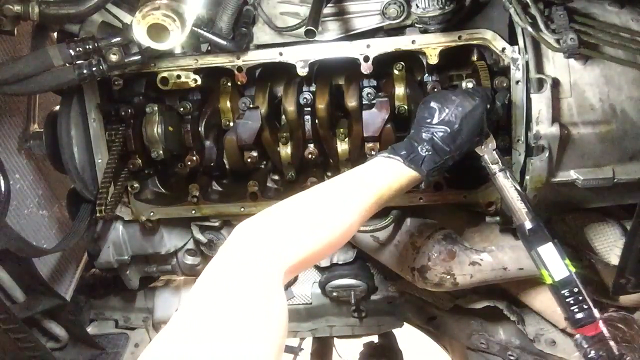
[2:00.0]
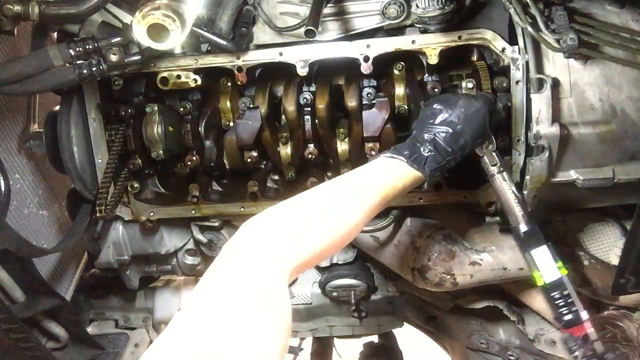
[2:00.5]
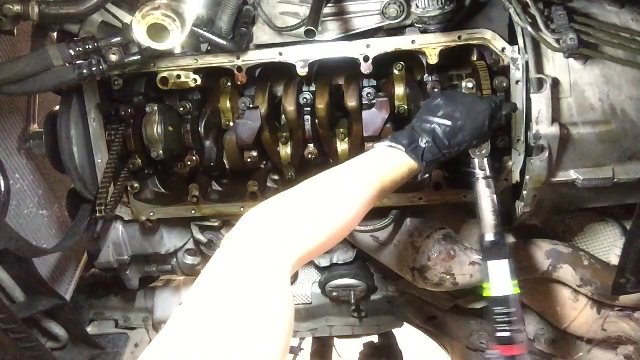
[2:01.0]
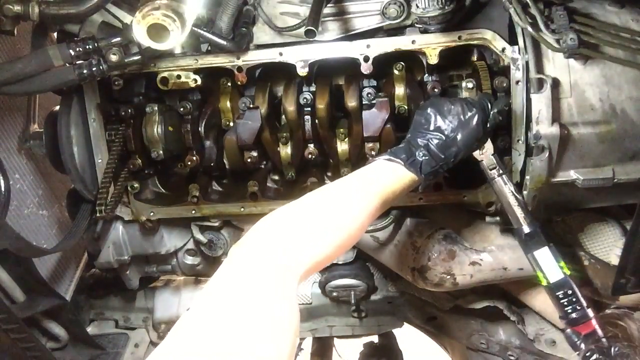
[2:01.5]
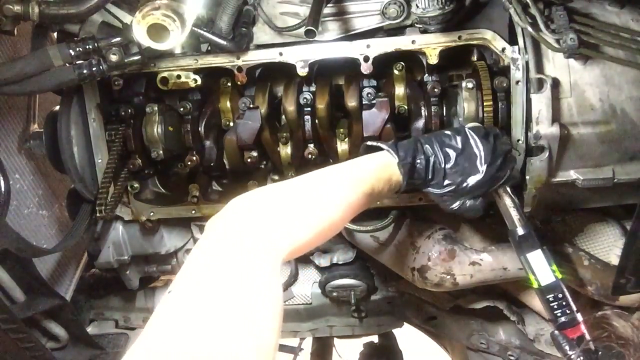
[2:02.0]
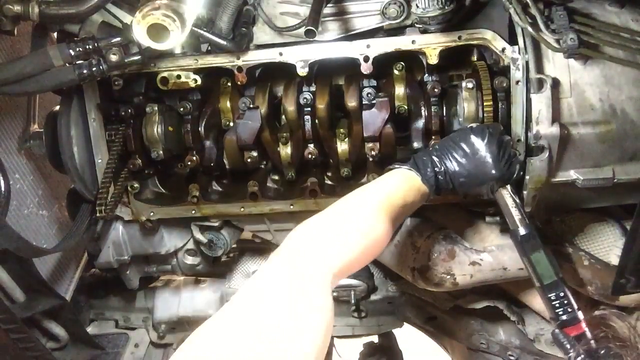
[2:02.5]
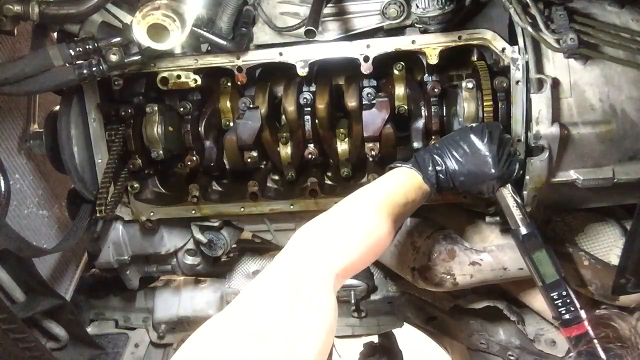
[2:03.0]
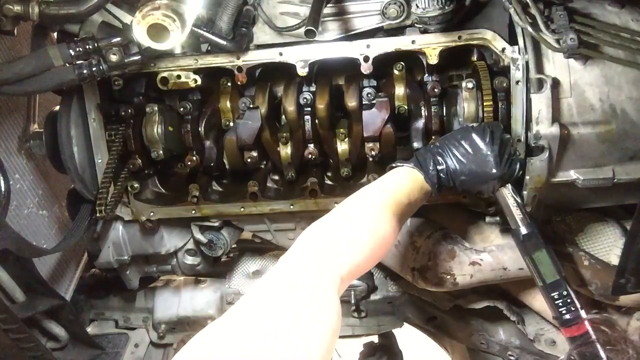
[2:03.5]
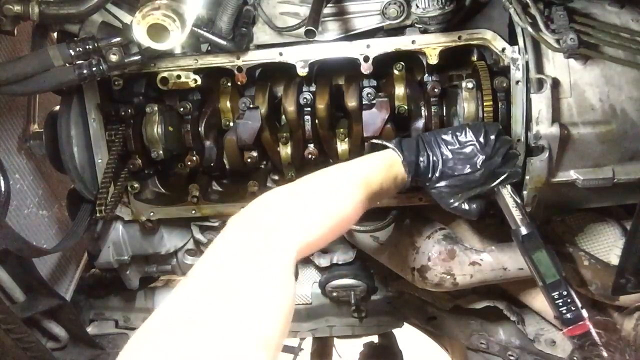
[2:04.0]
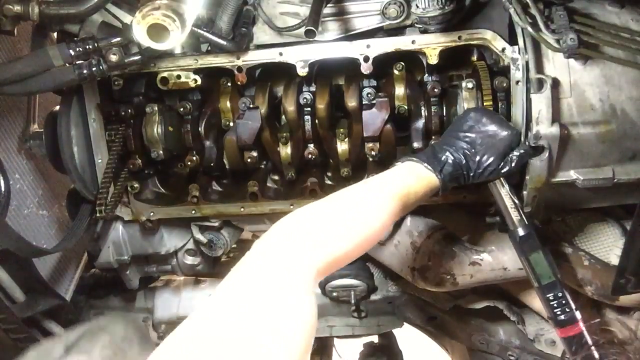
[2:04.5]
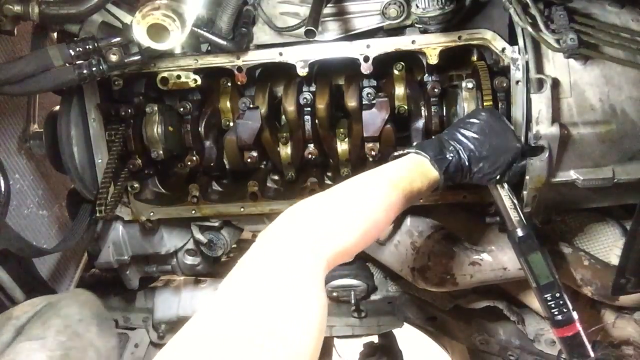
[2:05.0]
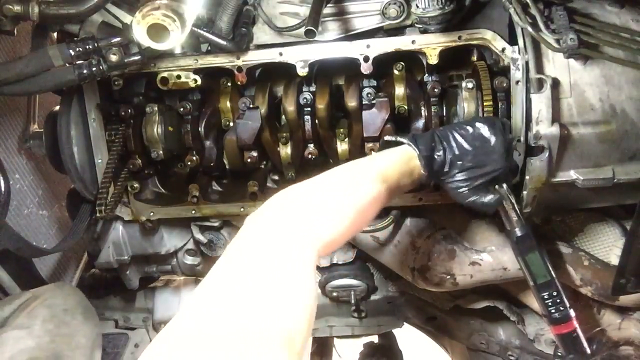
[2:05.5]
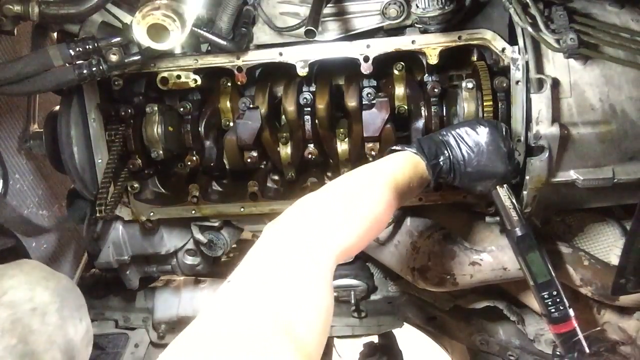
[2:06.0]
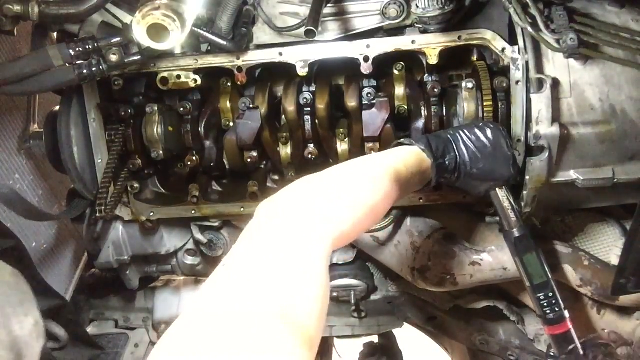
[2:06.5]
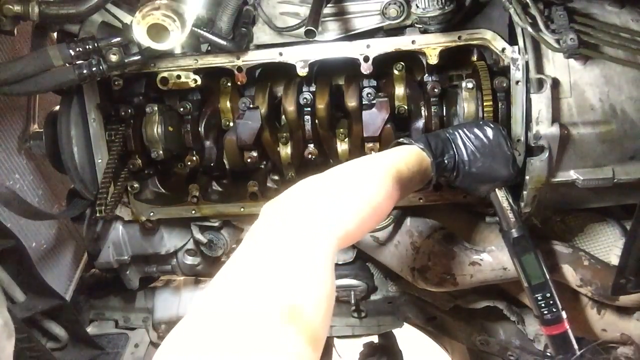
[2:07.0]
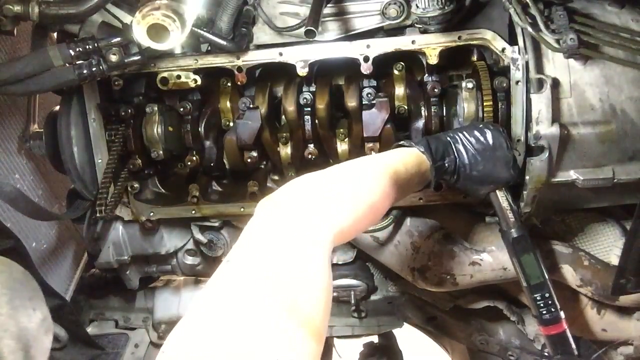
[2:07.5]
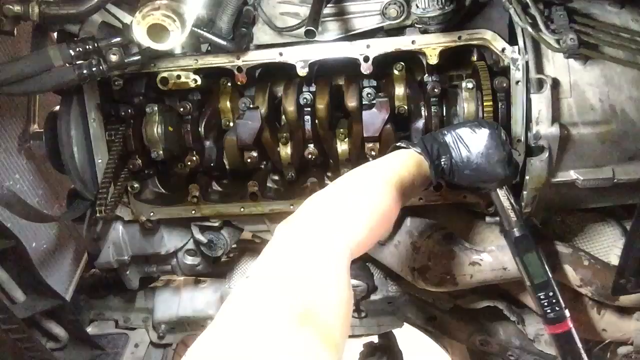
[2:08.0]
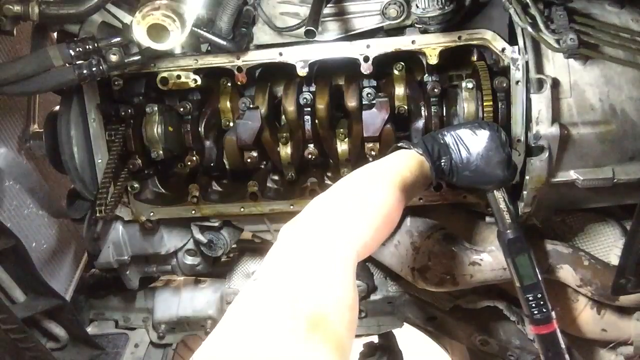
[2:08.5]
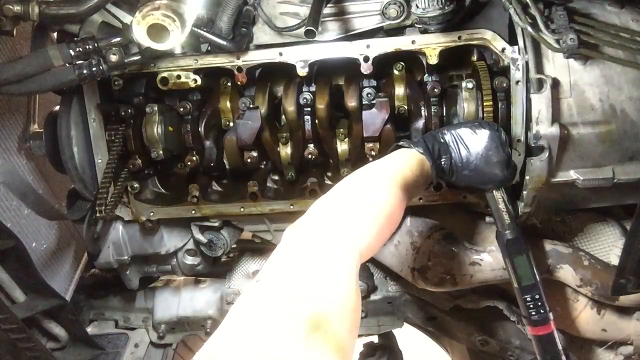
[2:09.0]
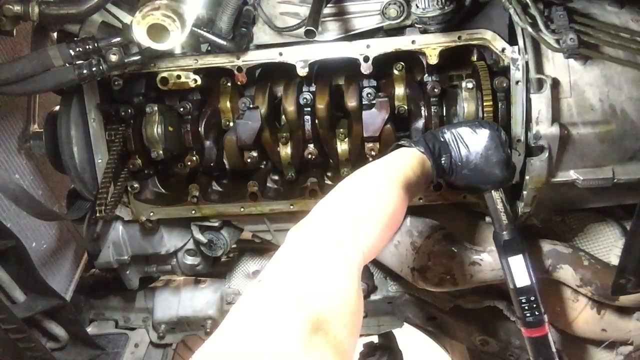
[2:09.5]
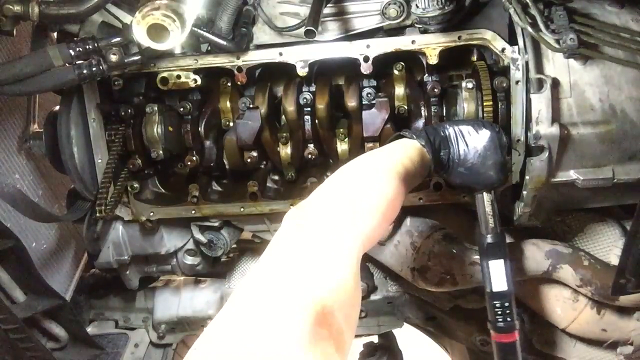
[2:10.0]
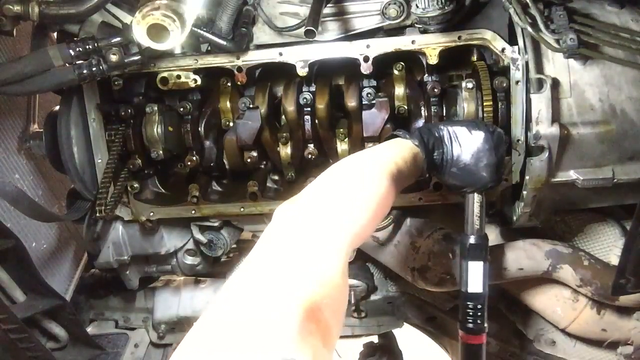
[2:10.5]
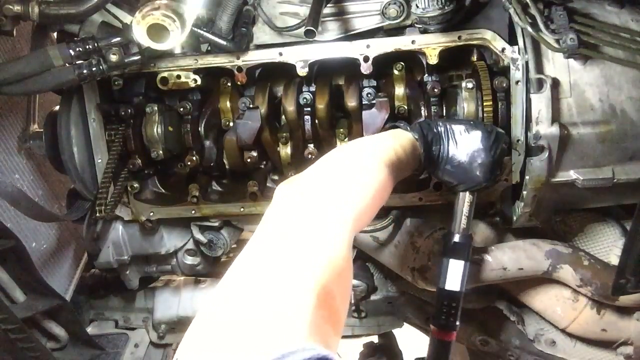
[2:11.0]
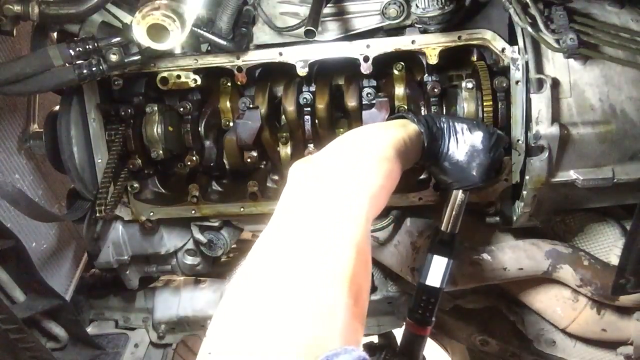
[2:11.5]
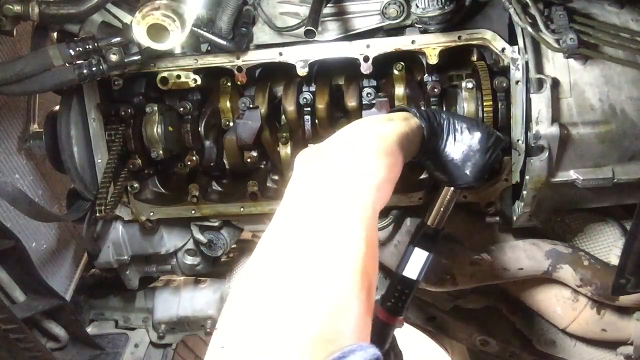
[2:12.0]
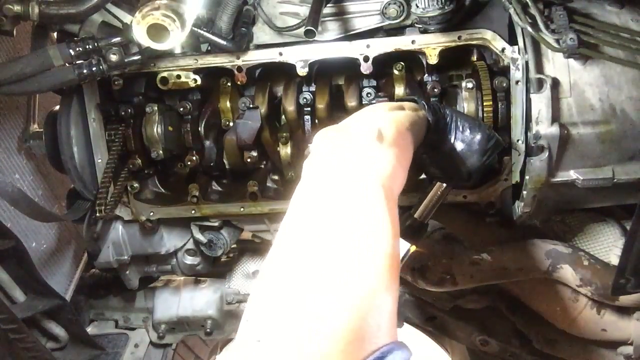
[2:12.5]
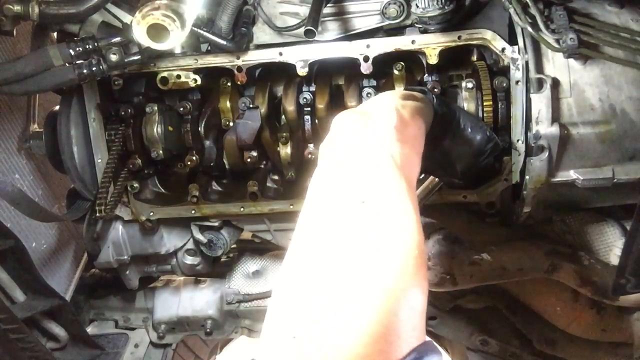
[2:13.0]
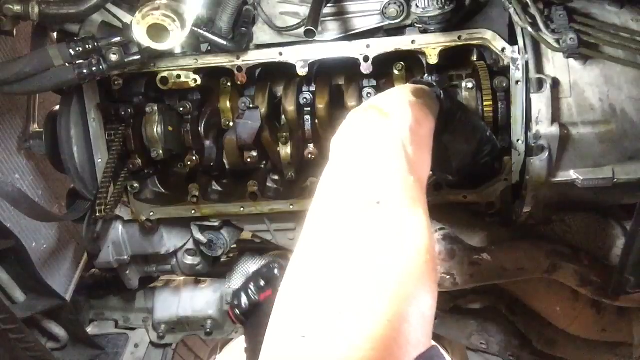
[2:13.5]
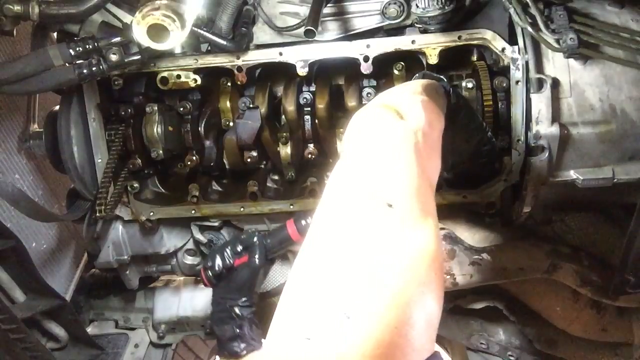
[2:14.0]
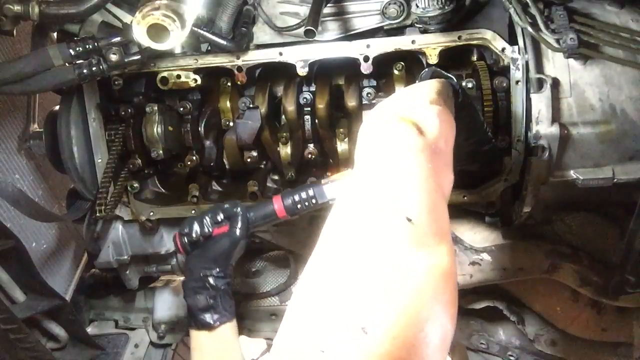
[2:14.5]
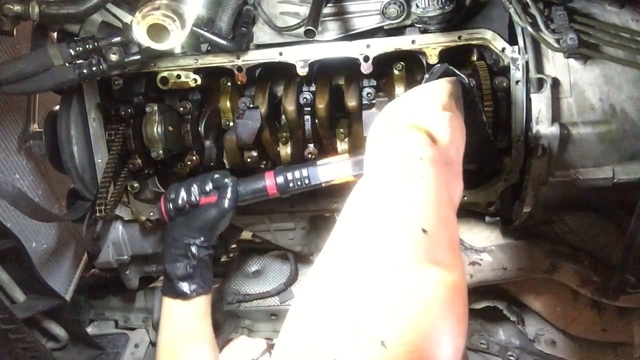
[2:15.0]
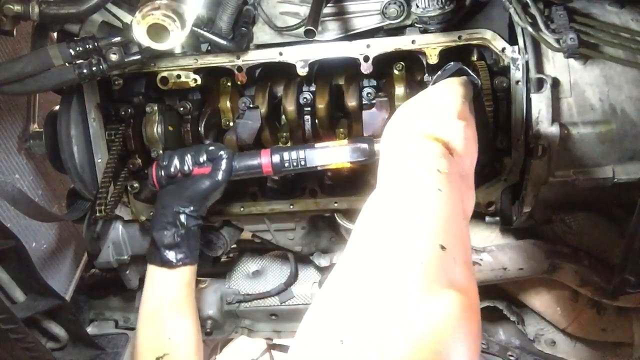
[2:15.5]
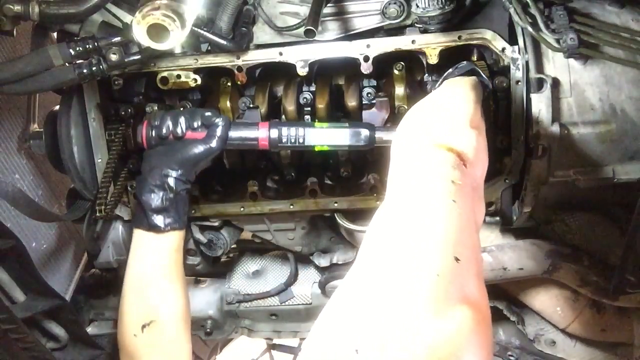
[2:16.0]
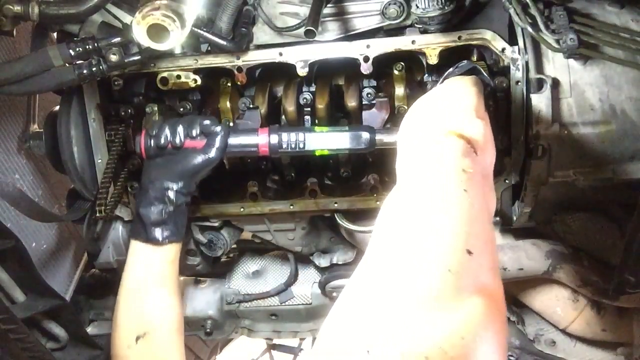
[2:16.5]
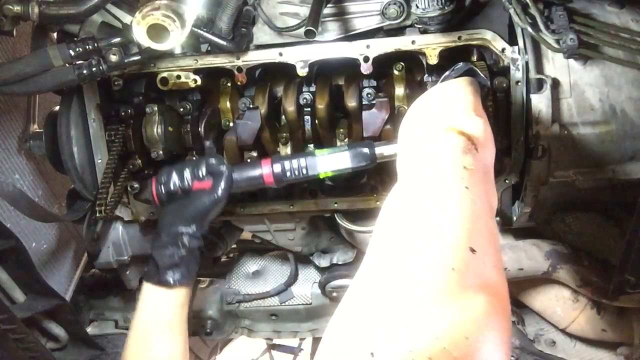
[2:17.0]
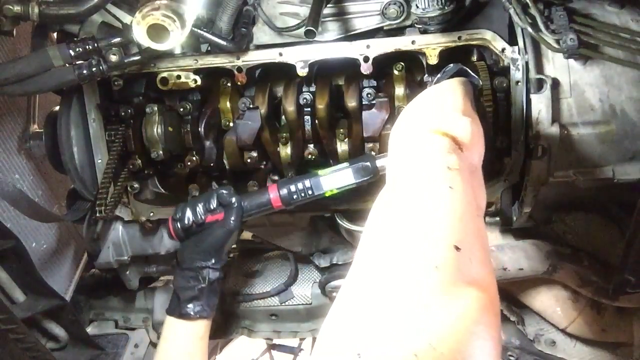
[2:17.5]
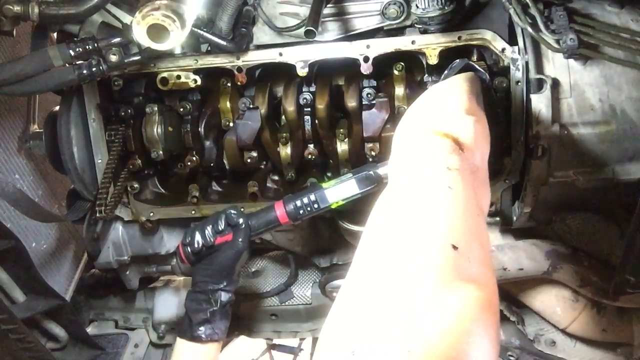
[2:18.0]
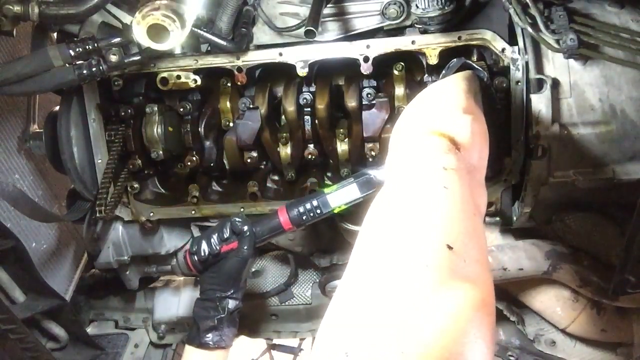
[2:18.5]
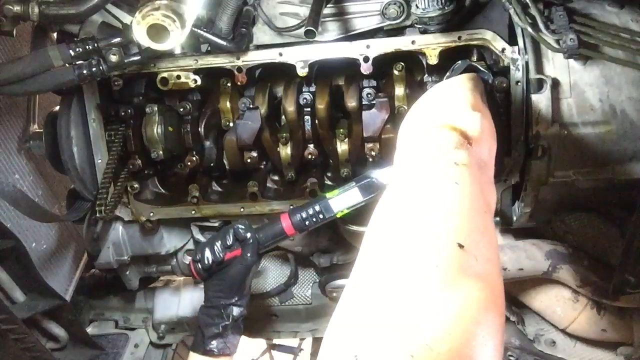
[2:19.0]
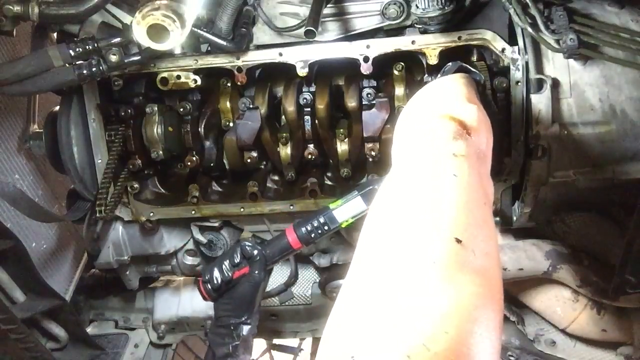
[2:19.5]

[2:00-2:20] The person attaches the device to a small piece of the engine on the right-hand side, apparently some kind of nut or bolt being tightened, though this is unclear because the engine is very detailed but quite small in the frame. They hold the device taut very firmly with their left arm and rotate it clockwise with their right arm, tightening with significant effort. The green lights on either side of the device's display appear to light up as they do this. Something appears on the display, but it is impossible to read because a really harsh light shining on everything washes it out.